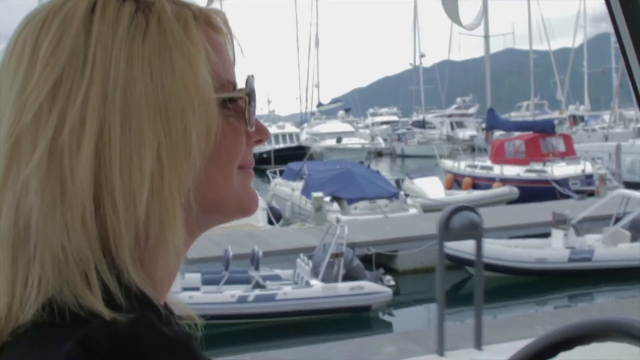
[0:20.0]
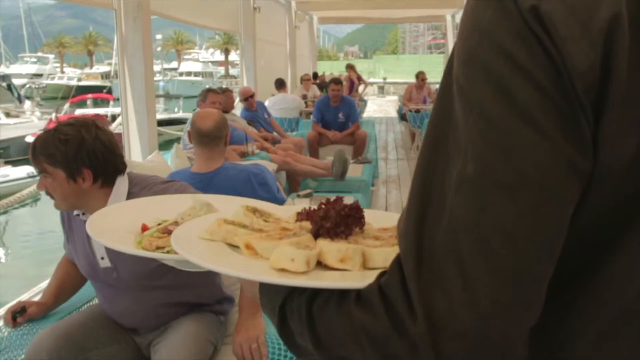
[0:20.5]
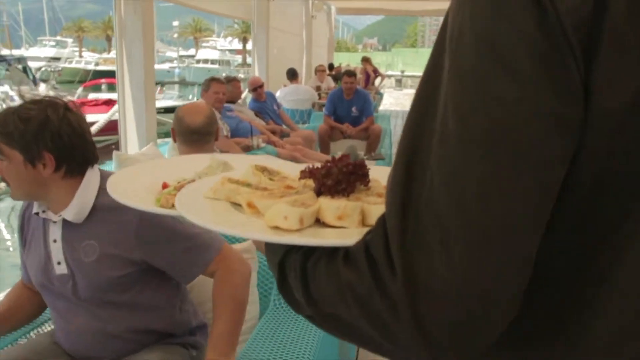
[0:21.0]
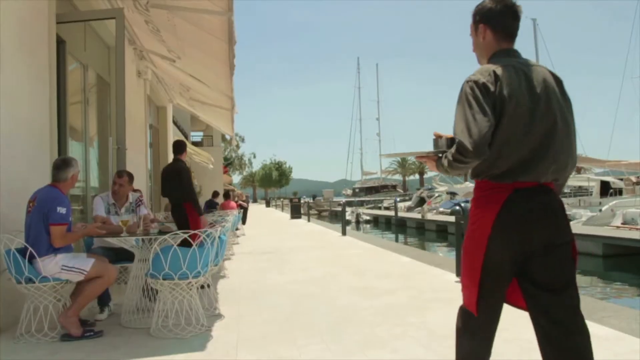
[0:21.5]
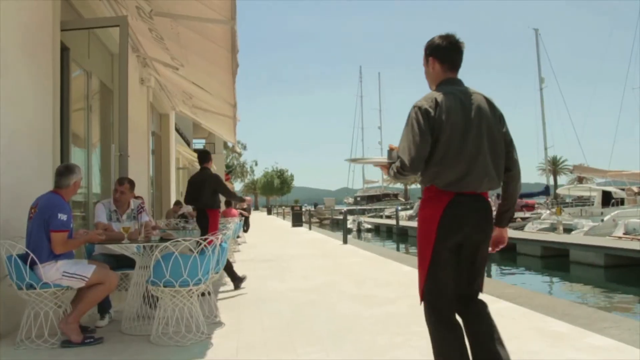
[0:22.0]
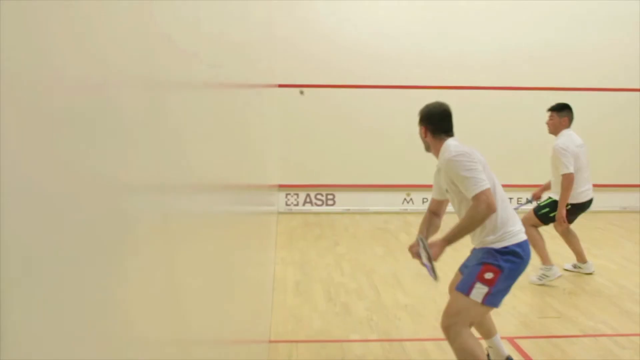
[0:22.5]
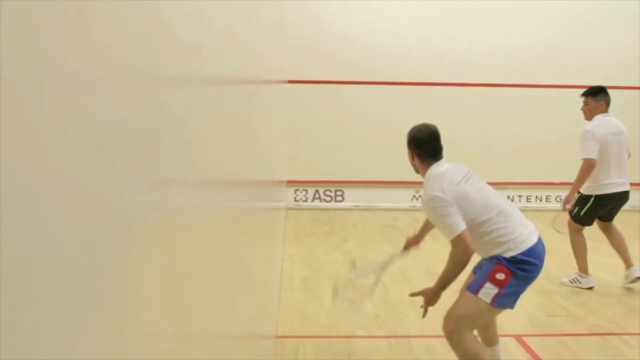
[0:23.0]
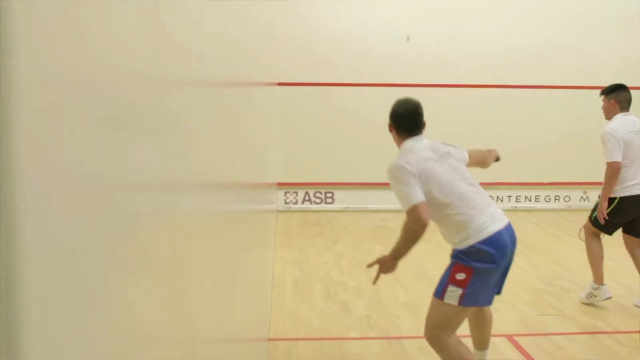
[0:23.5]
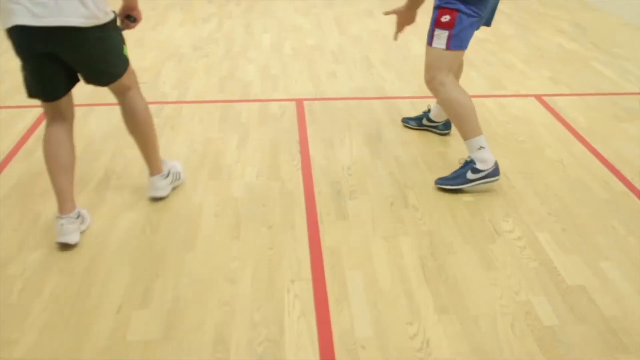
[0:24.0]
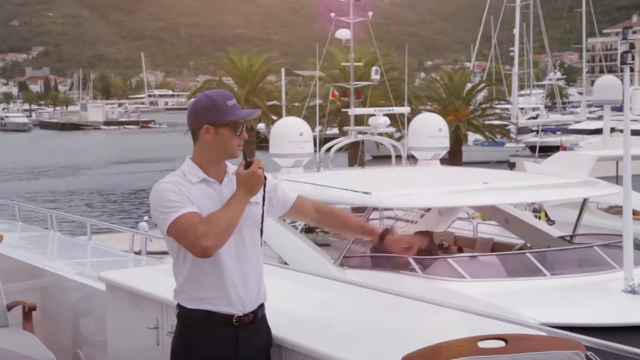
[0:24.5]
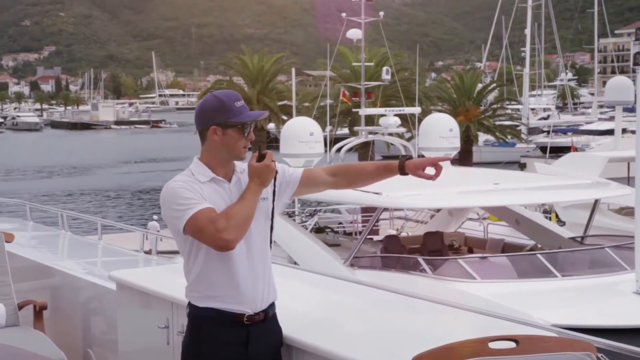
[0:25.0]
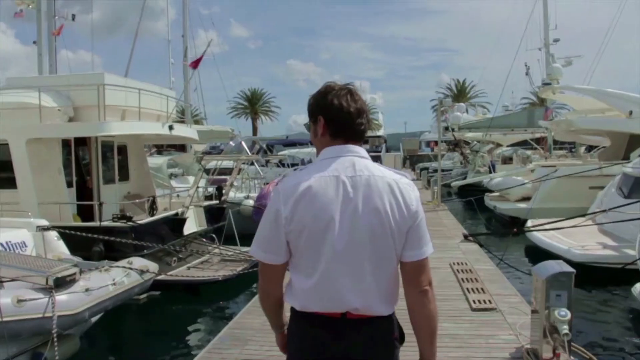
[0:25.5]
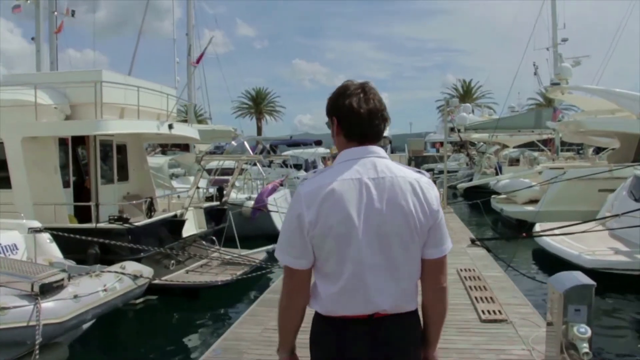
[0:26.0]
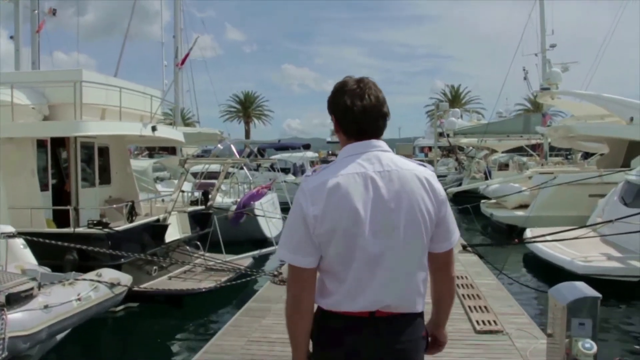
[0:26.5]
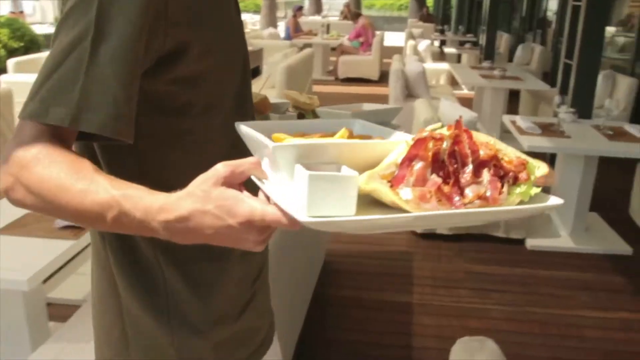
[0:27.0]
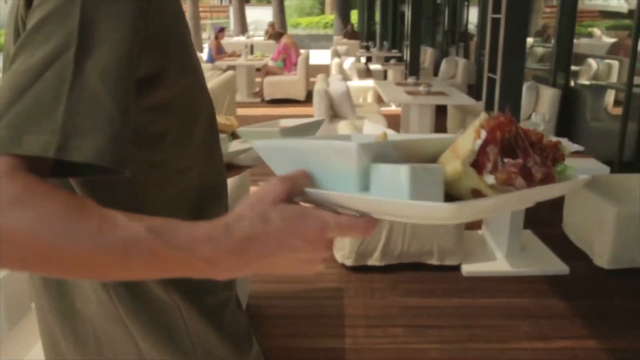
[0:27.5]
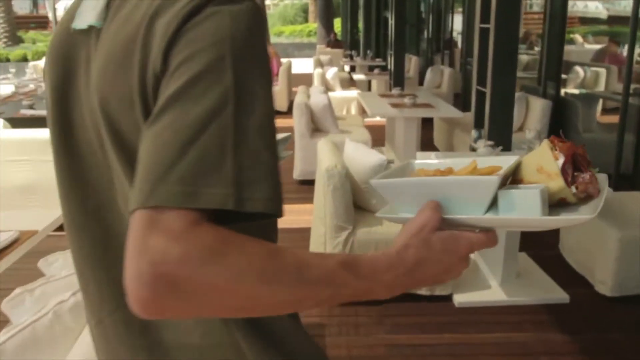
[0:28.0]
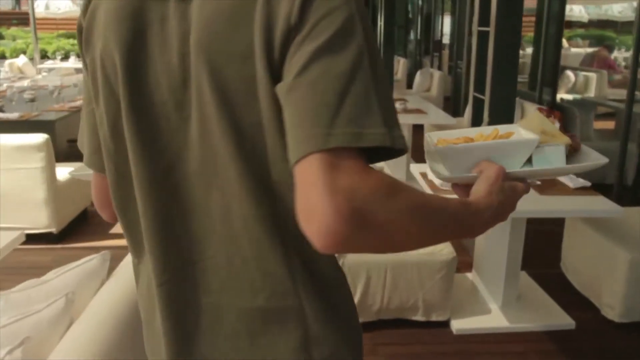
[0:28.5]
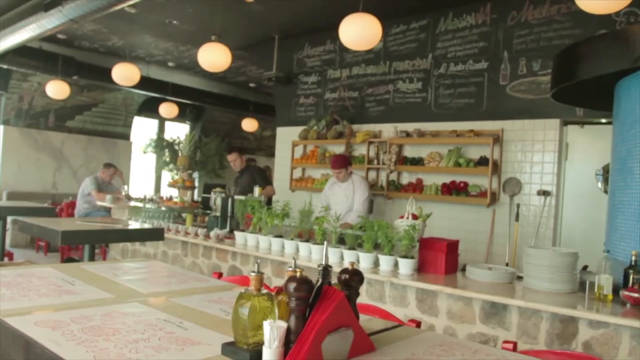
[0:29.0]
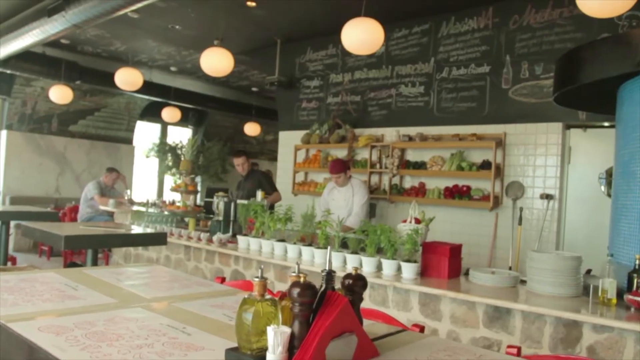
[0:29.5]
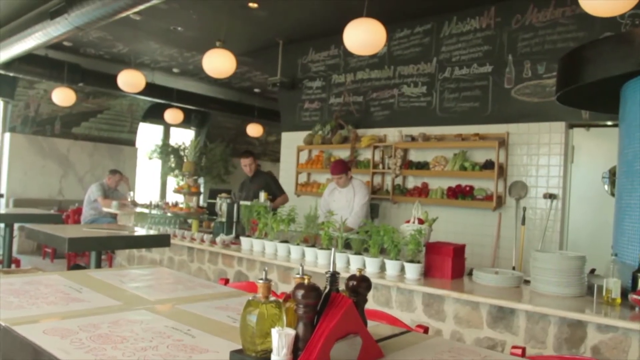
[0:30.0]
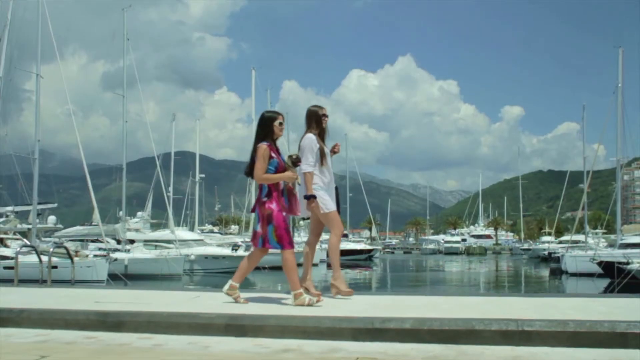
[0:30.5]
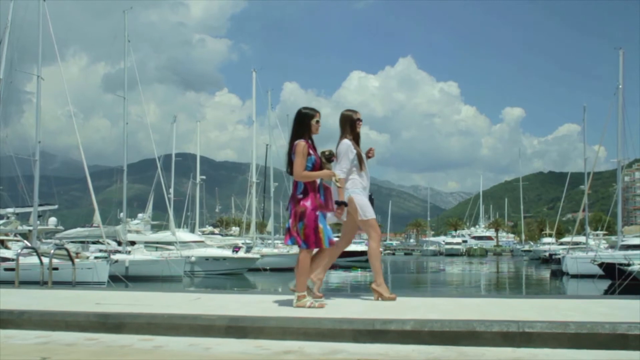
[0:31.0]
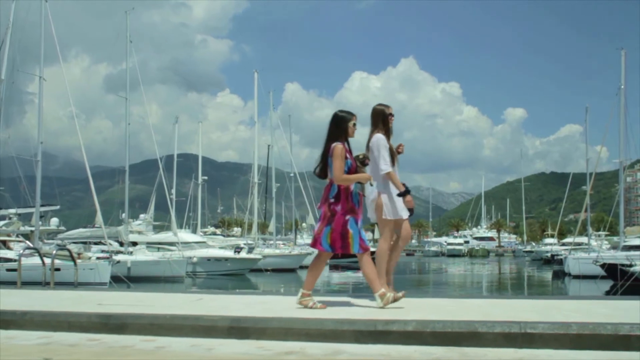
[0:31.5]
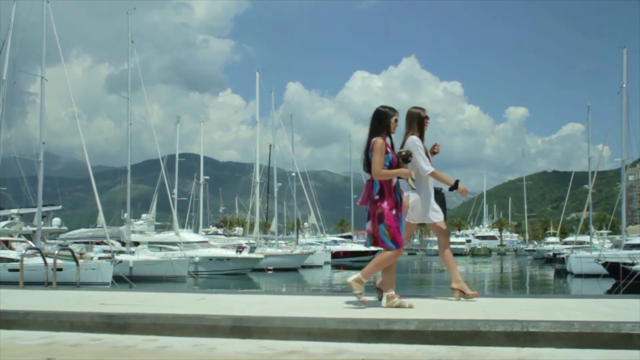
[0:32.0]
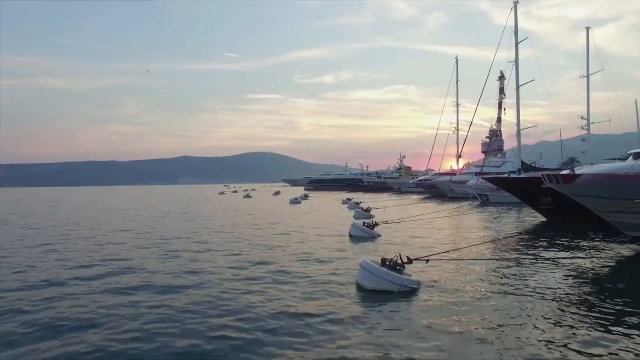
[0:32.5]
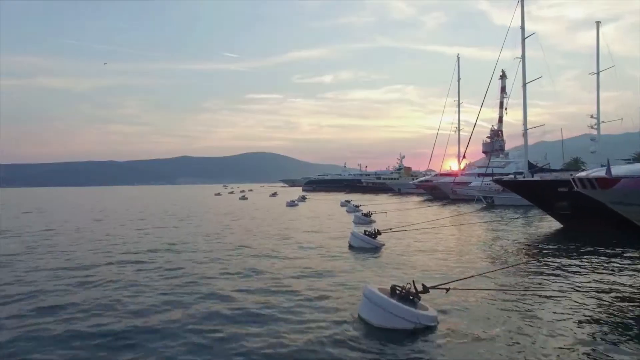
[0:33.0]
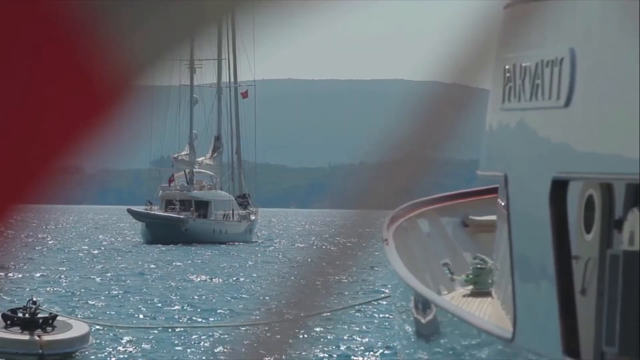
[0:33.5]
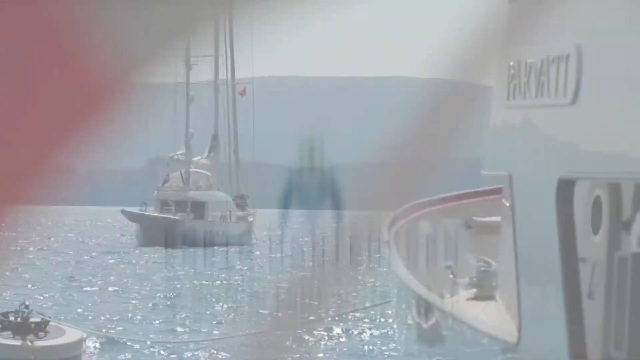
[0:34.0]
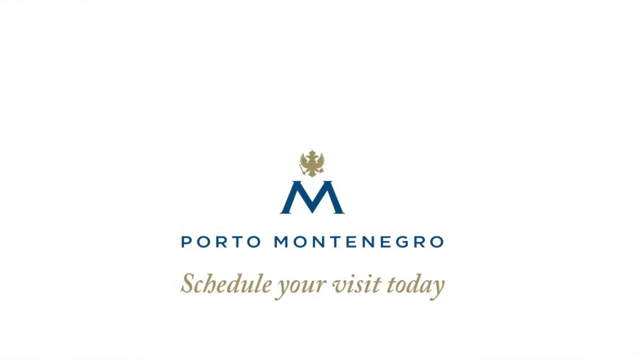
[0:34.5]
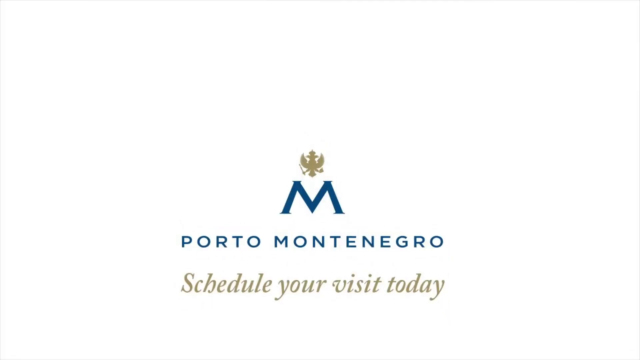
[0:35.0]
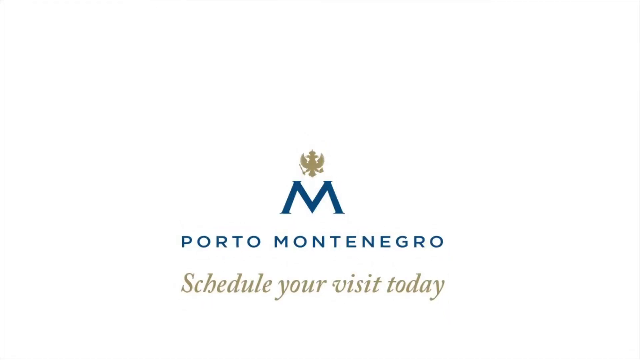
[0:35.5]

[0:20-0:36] There are possibly ship-riding and gaming options. A lot of food is shown, with a hotel serving many foods, and many ships and yachts are there for visitors and travelers. The place seems very expensive, with many ships and personnel for travelers.